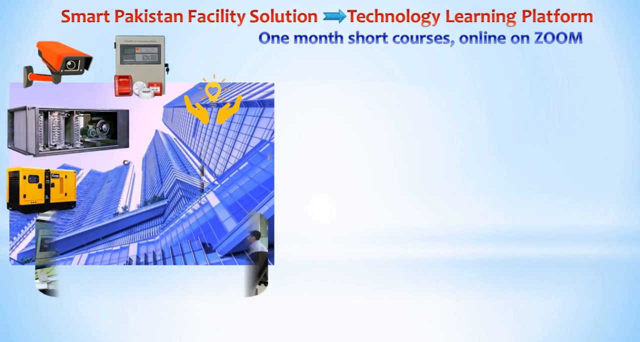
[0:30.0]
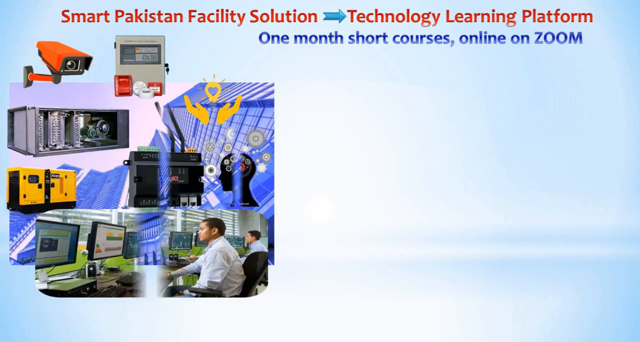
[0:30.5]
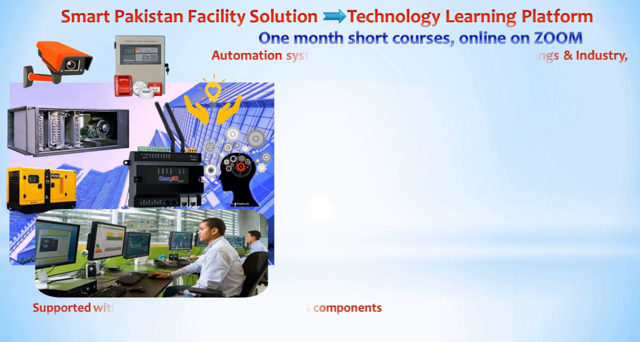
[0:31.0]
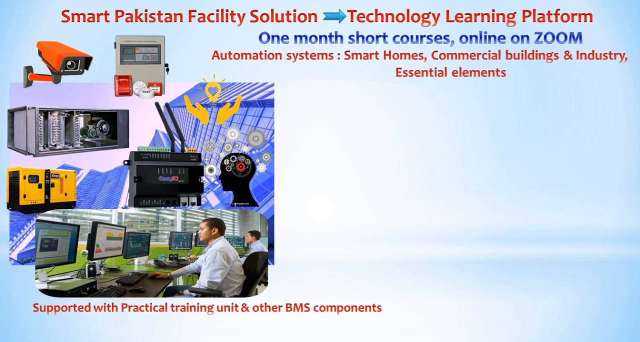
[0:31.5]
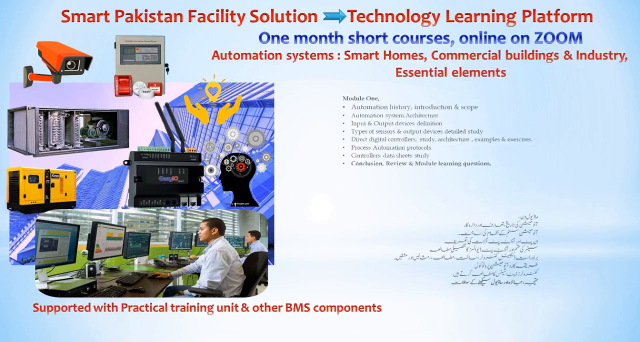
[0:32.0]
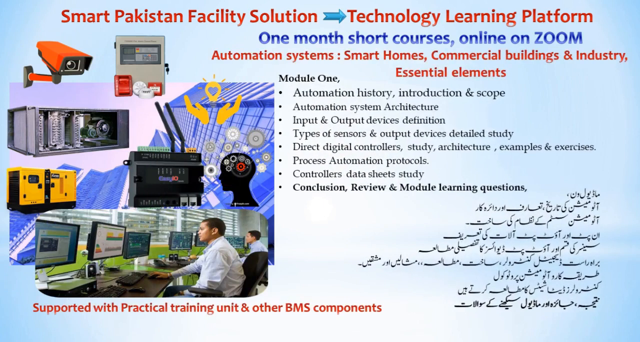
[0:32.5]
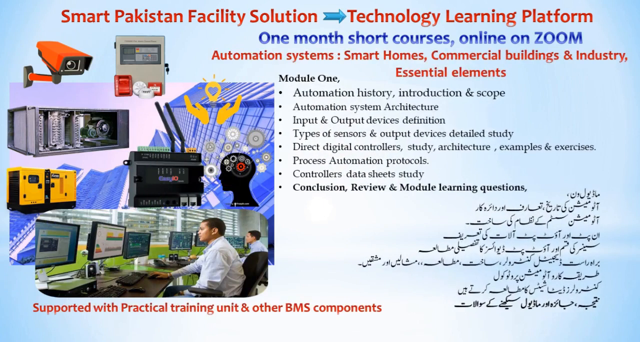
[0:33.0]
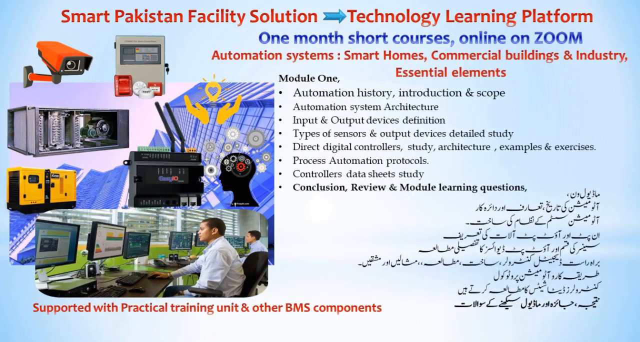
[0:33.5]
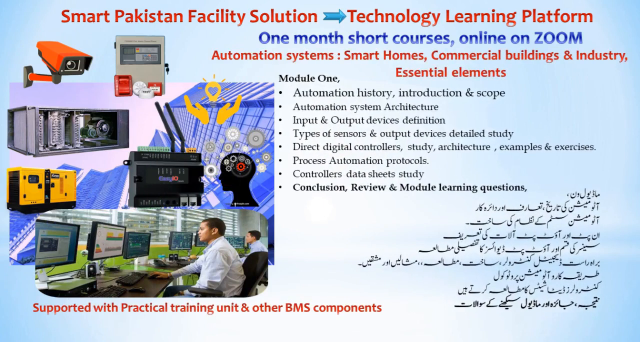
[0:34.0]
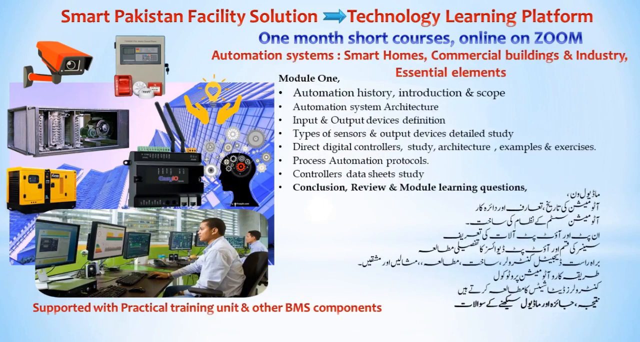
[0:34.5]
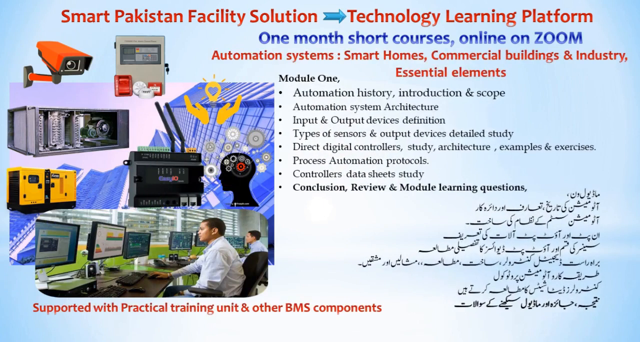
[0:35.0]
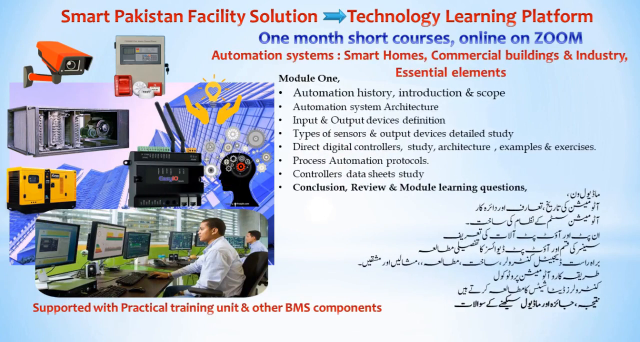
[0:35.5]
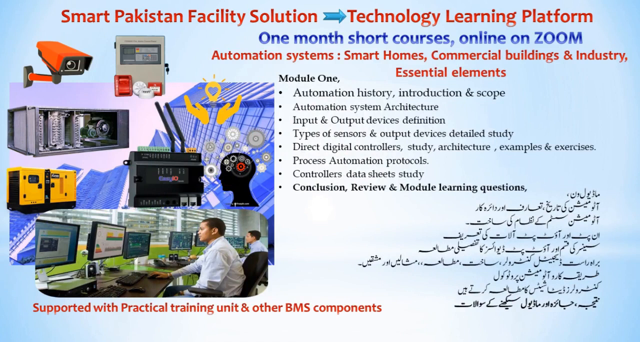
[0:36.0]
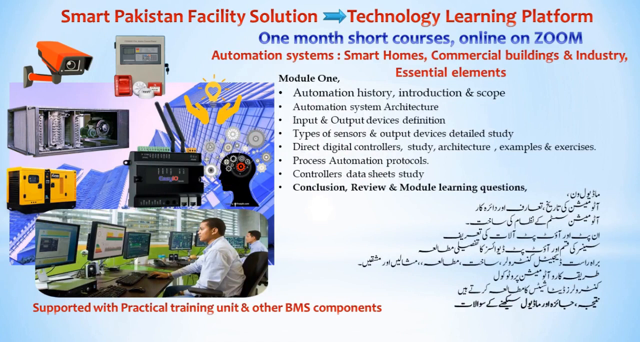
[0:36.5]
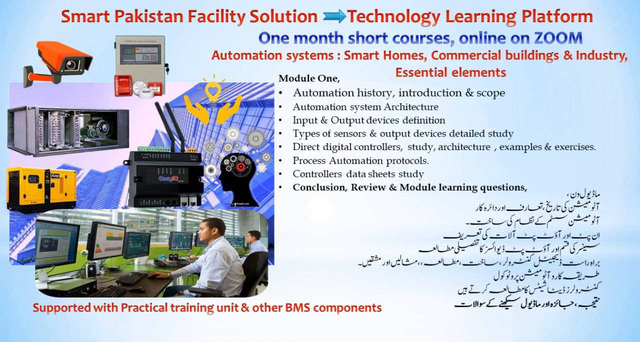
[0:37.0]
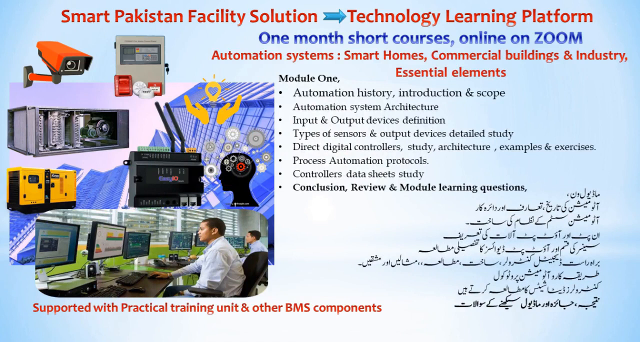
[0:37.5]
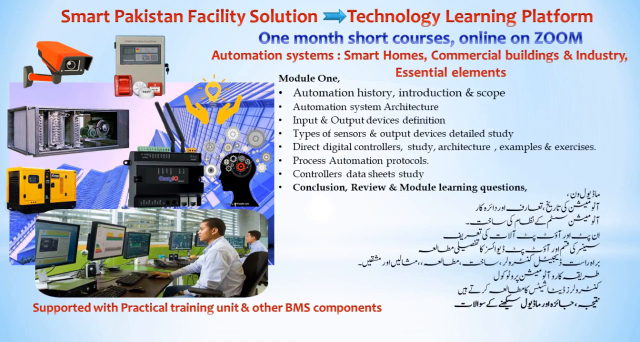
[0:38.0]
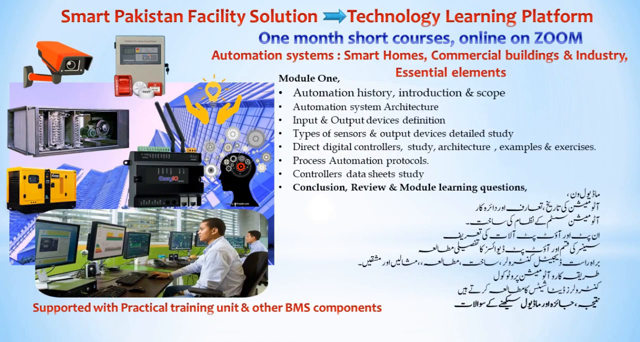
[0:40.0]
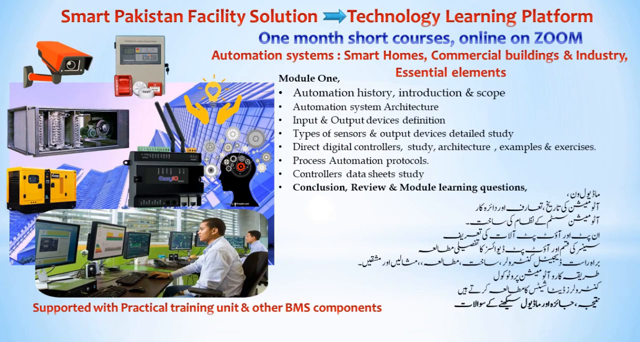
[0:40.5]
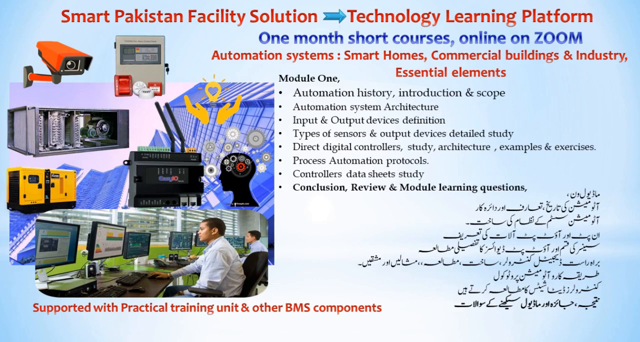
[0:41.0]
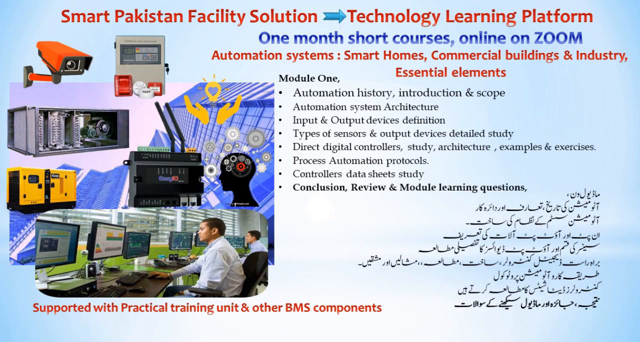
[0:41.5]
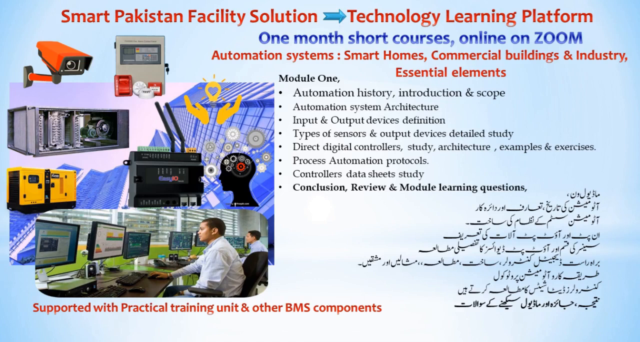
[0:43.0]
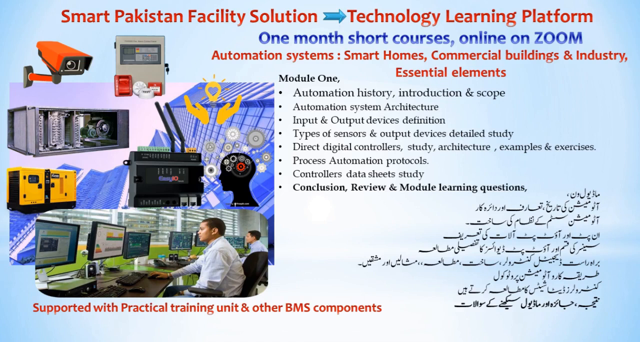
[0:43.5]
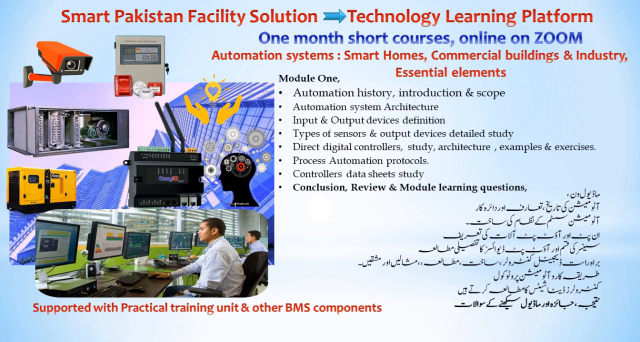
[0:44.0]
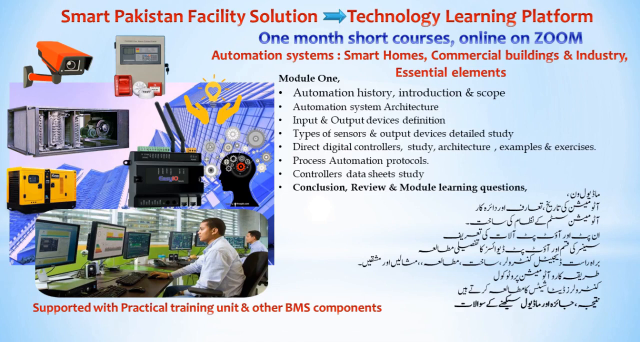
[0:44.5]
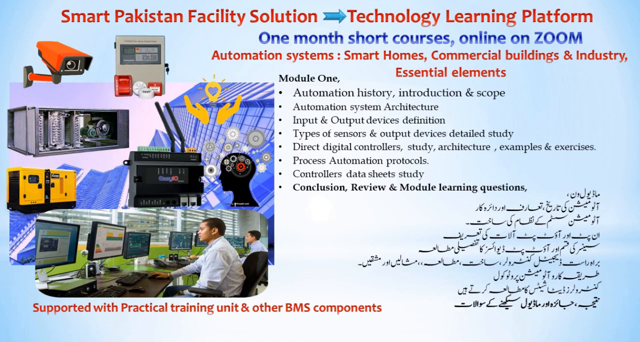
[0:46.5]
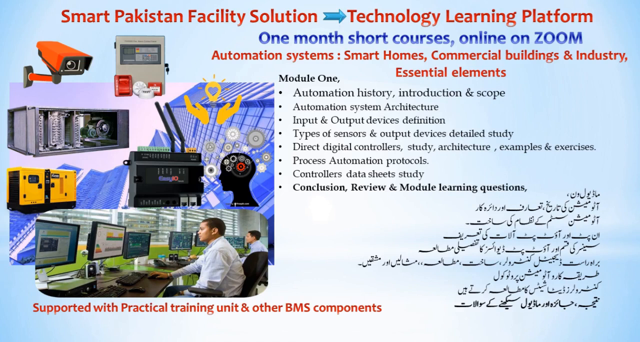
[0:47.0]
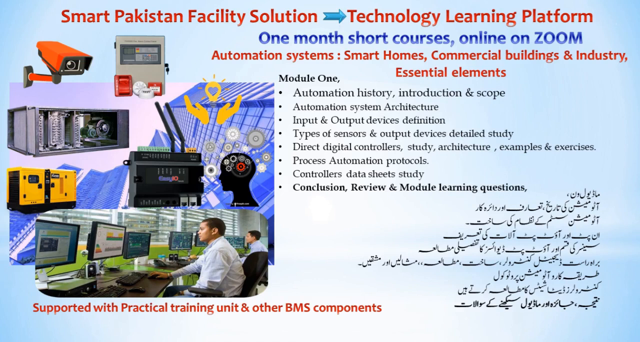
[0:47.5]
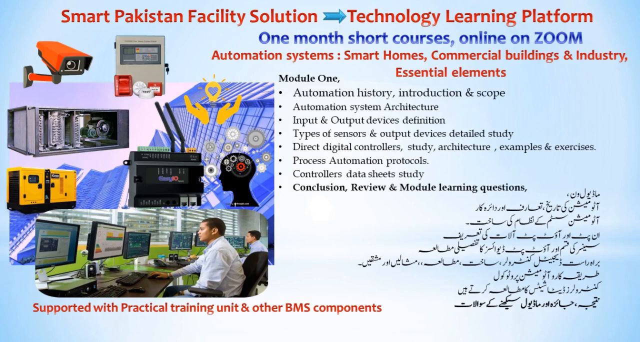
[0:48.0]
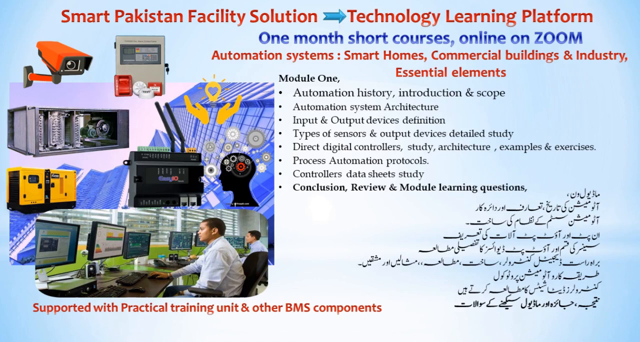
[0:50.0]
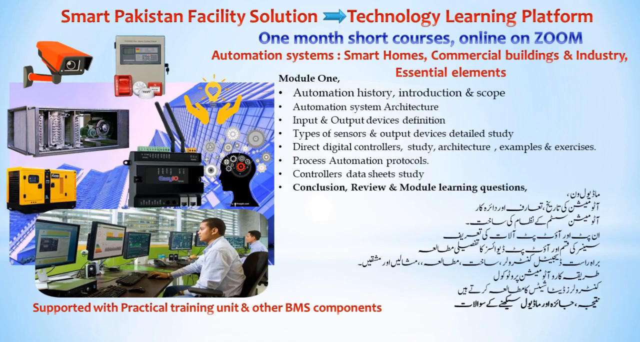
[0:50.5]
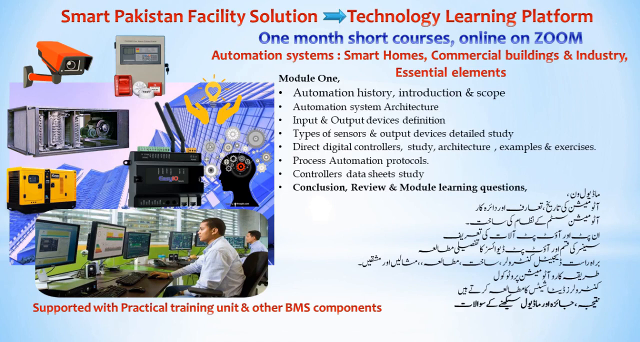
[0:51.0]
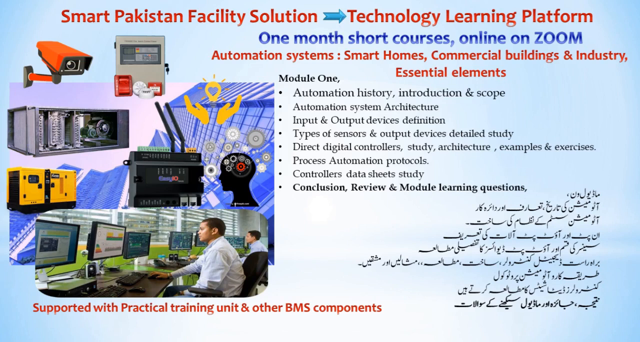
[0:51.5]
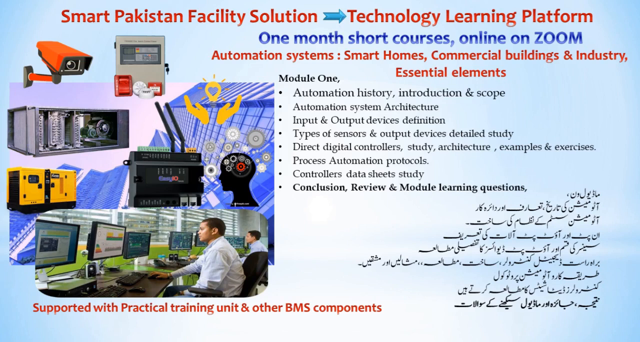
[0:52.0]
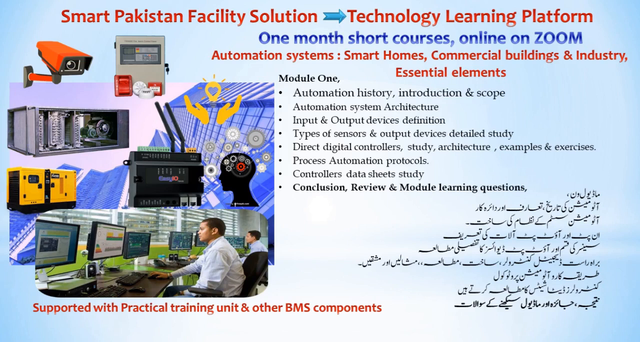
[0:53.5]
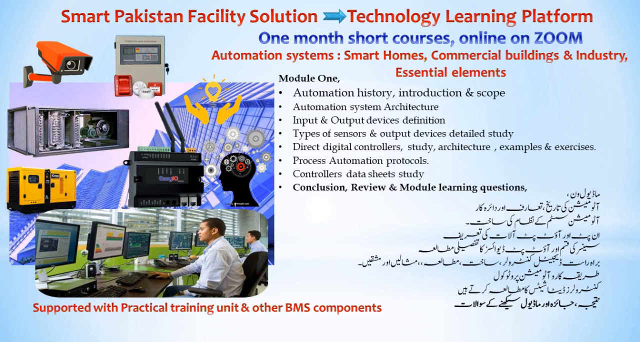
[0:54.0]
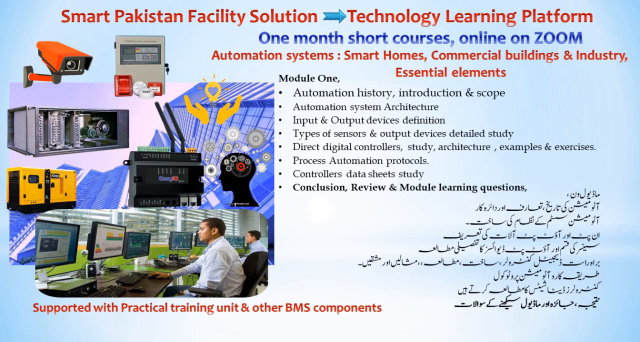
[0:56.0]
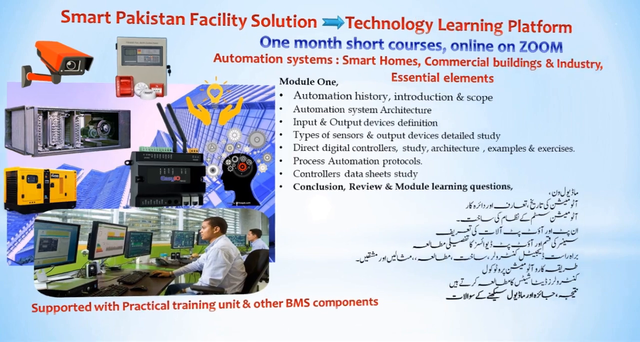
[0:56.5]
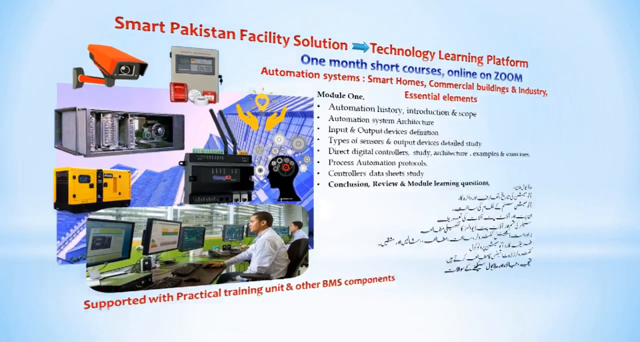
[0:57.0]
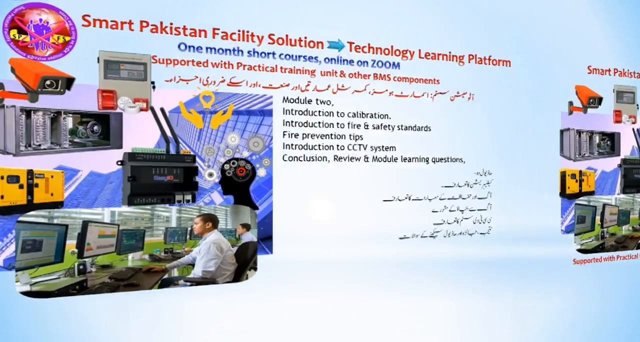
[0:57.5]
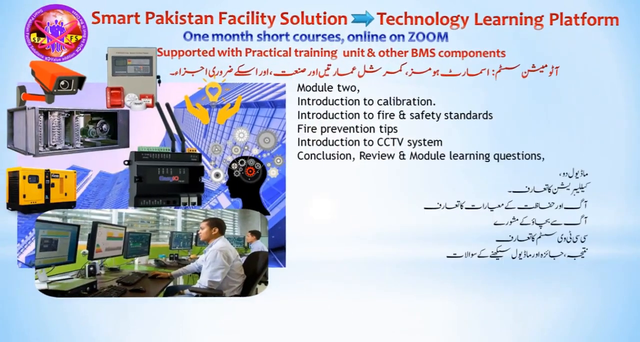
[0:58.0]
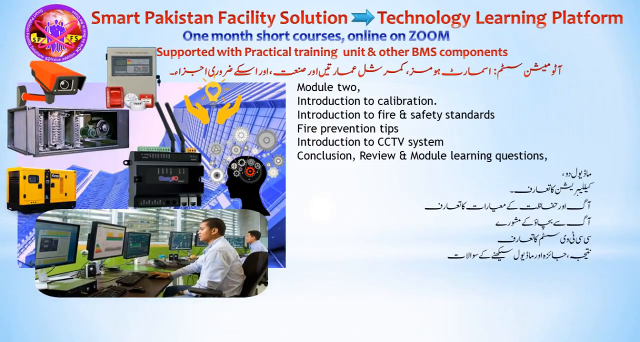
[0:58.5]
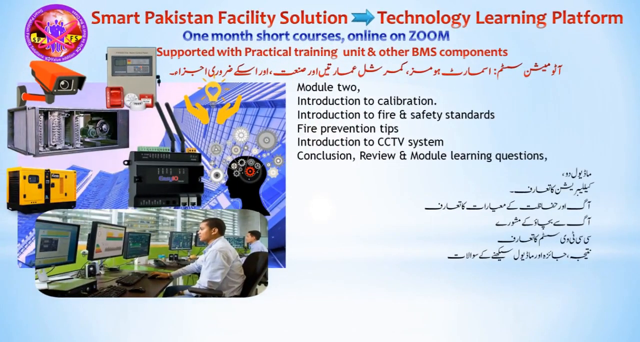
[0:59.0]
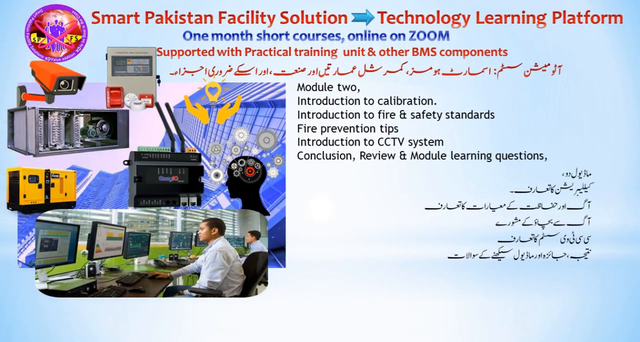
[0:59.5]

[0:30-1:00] The next slide shows an image of two people working in front of multiple monitors, along with different machinery and a security camera. The top title of the slide reads "Smart Pakistan Facility Solution" with a blue arrow, followed by "Technology Learning Platform". Underneath, blue text says "one month short courses online on Zoom", and below that red text says "automation systems, smart homes, commercial buildings and industry essential elements". Text labeled "Module 1" has 8 bullet points listing the information to be covered. On the bottom left, underneath the images, red text says "support with practical training unit and other BMS components". On the bottom right of the screen is text that seems to be in Hindu. The text looks handwritten and pasted onto a blue and white background that looks like a sky.